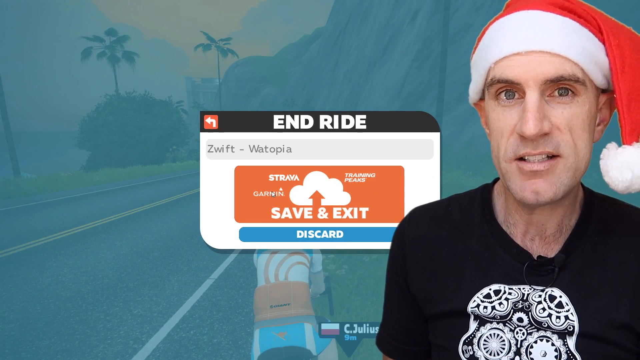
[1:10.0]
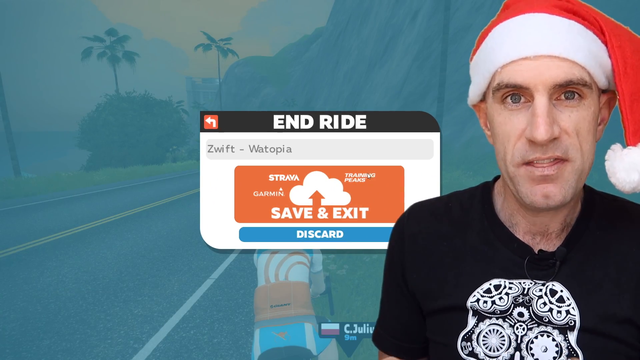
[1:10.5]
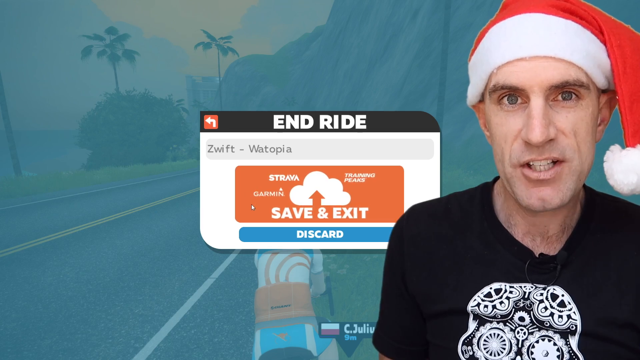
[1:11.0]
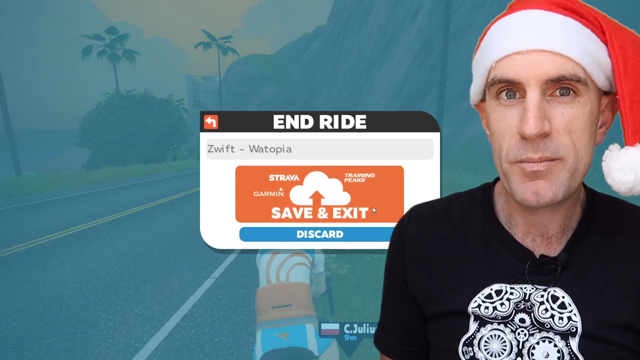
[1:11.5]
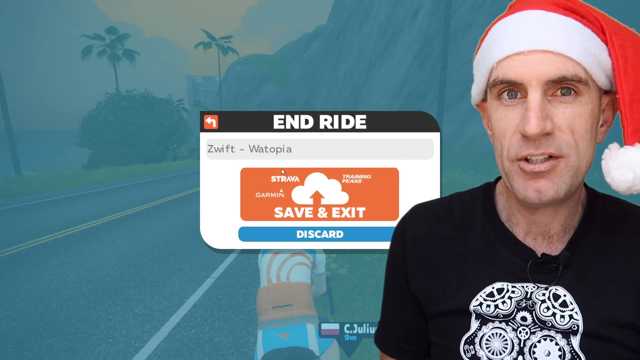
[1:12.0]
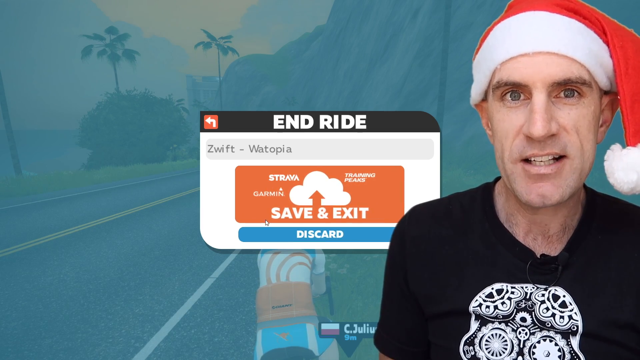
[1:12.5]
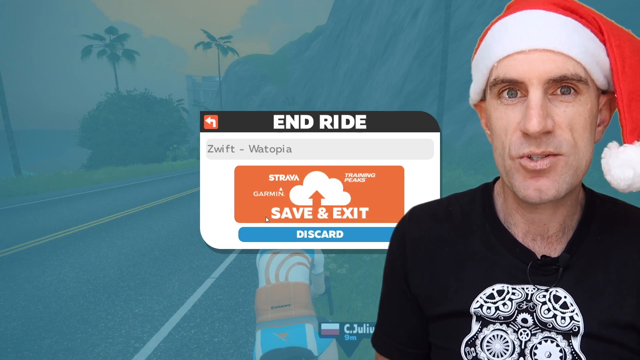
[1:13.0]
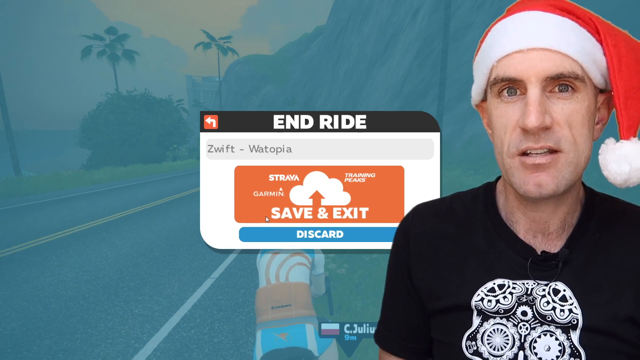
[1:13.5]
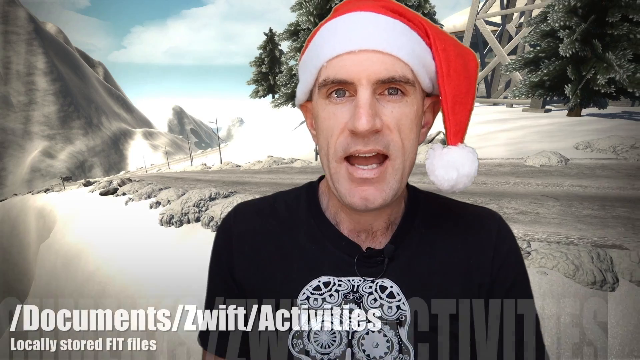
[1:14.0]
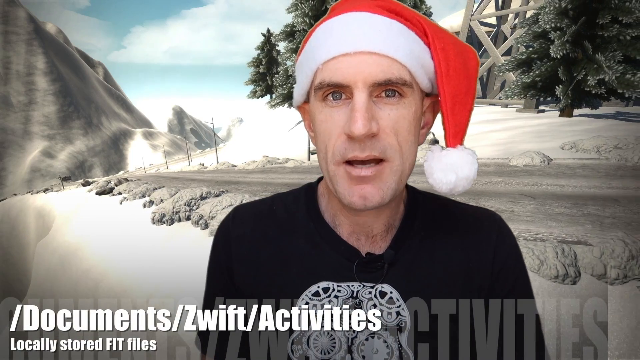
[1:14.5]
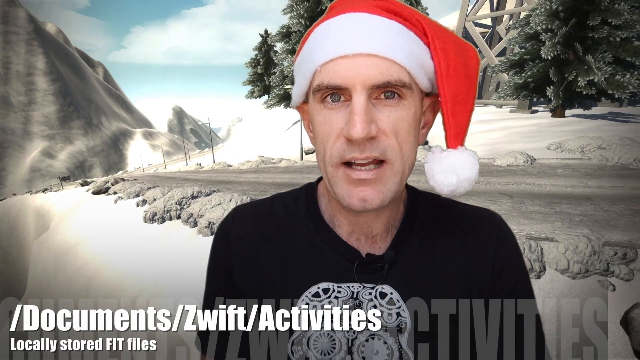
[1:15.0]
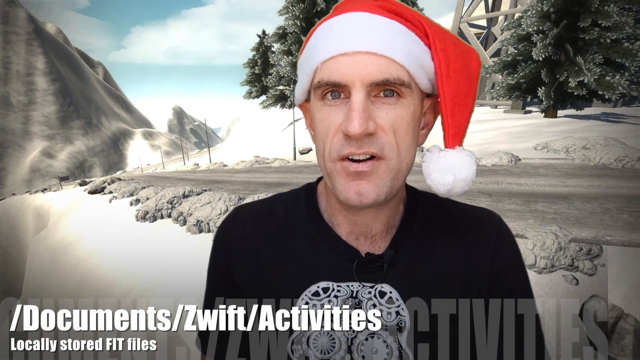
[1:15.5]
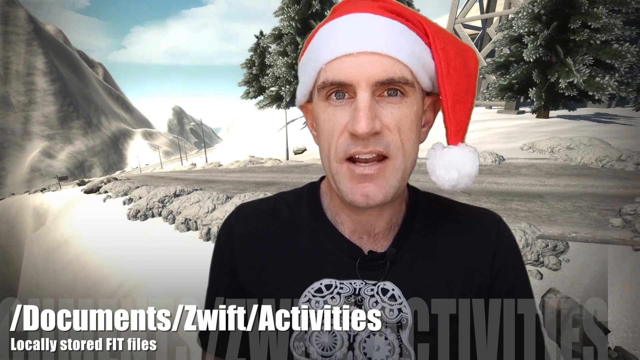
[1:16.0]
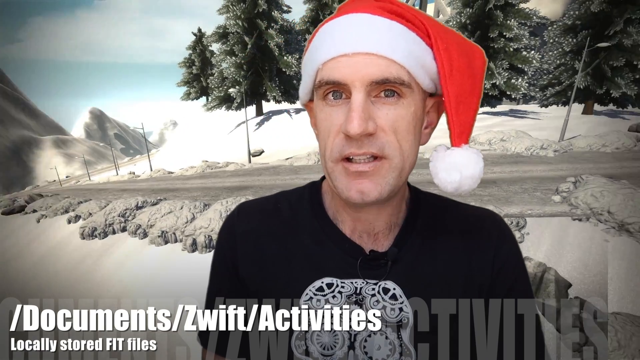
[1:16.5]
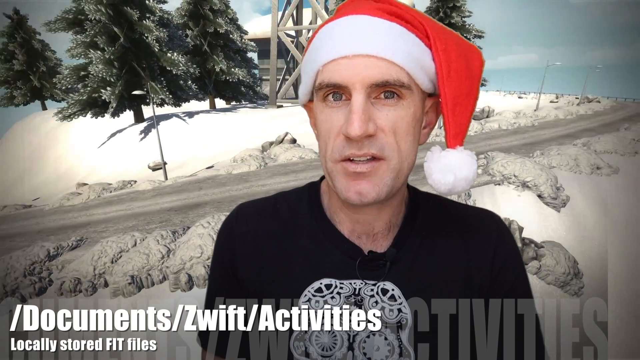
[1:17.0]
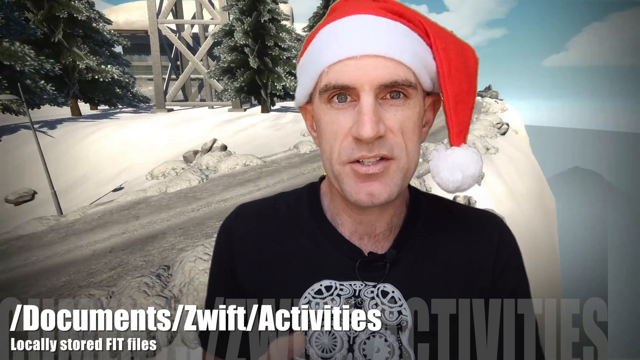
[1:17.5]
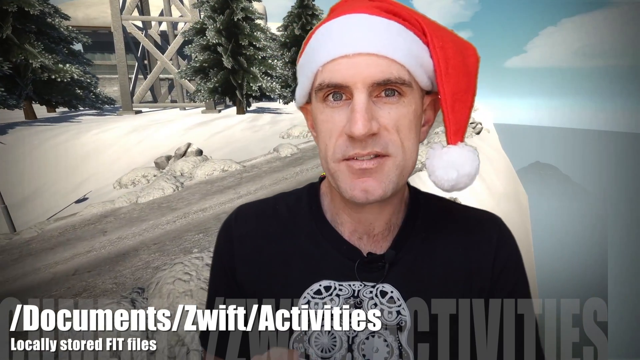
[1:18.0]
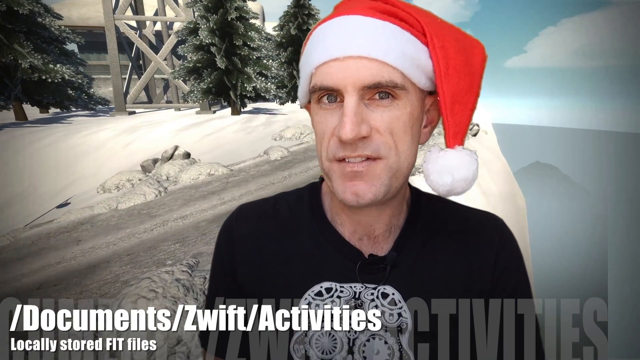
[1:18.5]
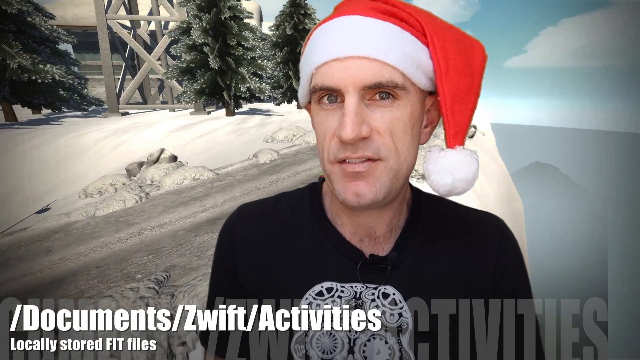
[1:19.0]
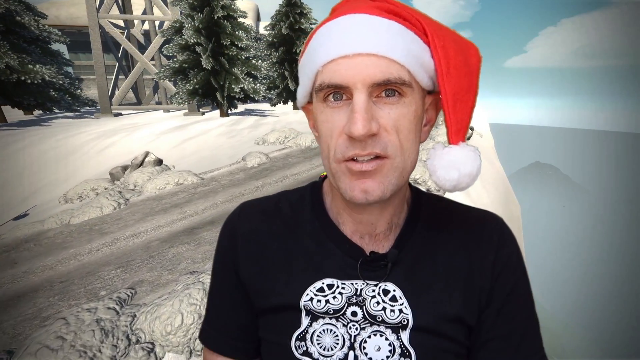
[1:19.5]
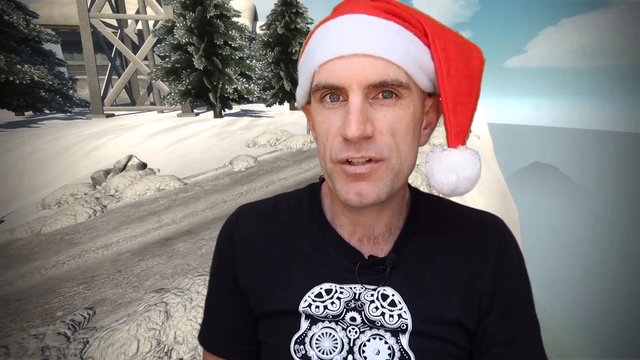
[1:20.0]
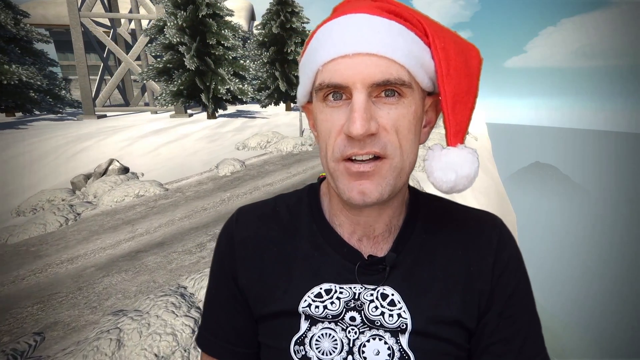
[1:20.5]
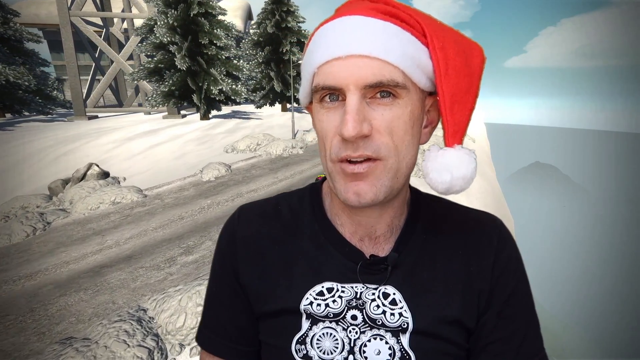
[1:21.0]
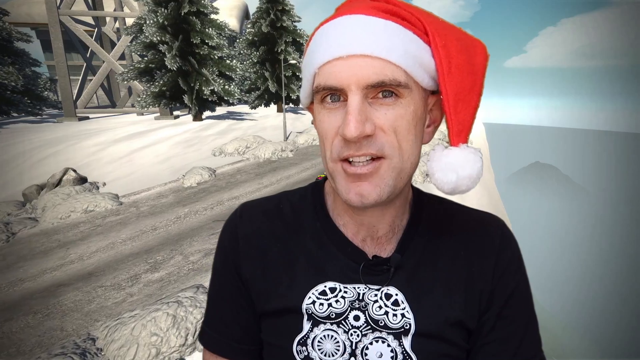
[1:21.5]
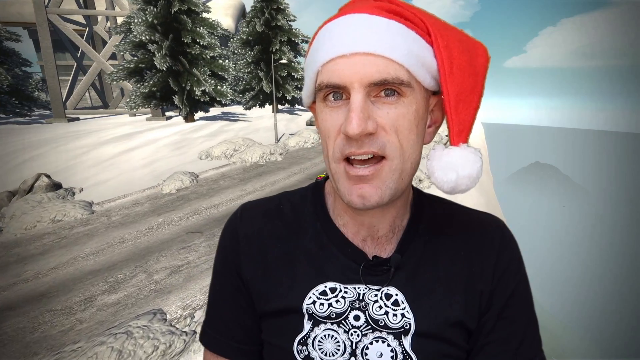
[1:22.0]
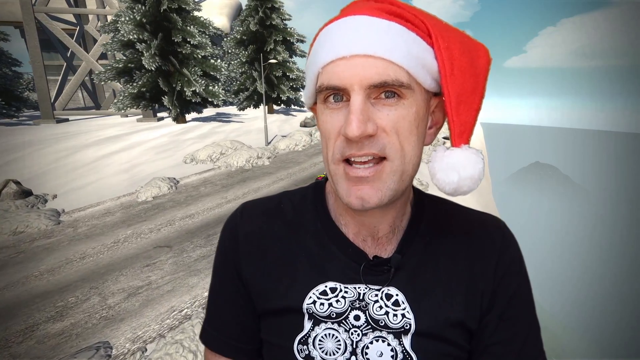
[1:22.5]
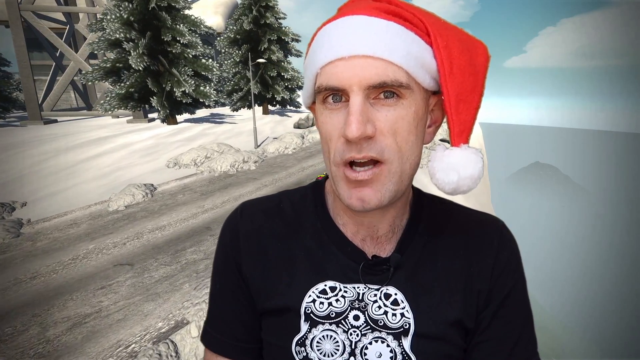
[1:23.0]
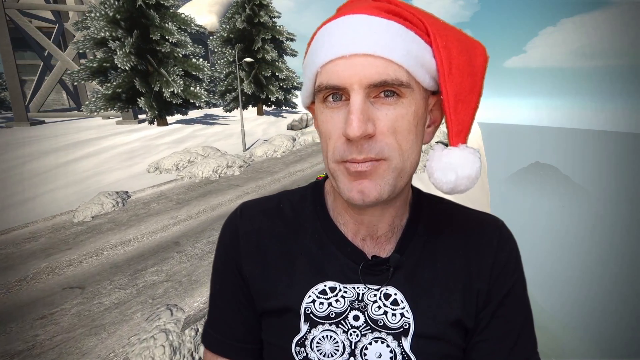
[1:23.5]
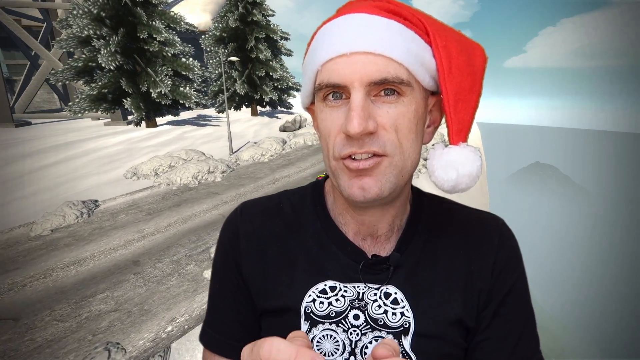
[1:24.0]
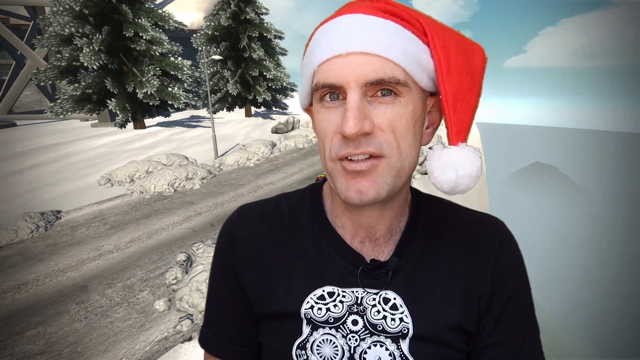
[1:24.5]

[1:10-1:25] Briefly, the same screen remains, with a button that says "End Ride", and he appears to hover his mouse over it. The green-screen background then changes from the tropical road back to the snowy bike-riding background, and the man moves from the far right side of the screen a little closer to the middle. As he does so, text appears at the bottom of the video for a couple of seconds, apparently a section header: "/documents/Zwift/activities locally stored FIT files". The text leaves the screen, and the man keeps talking for a couple of seconds.